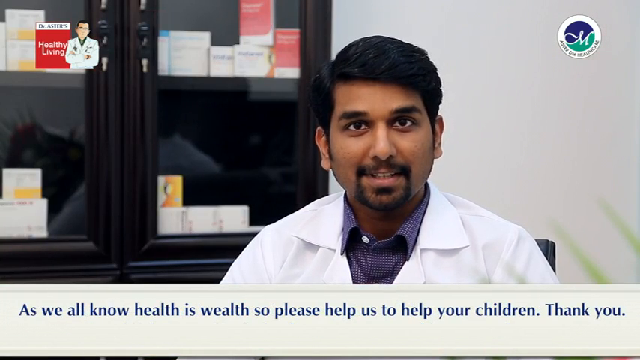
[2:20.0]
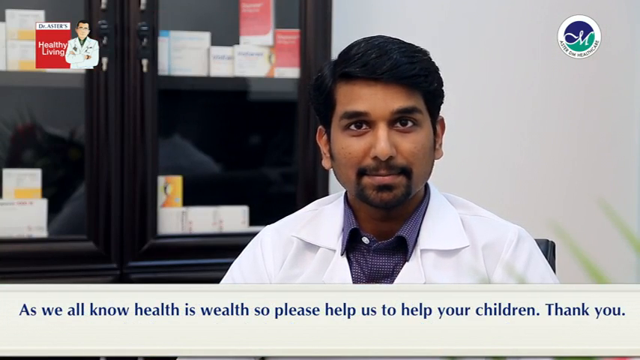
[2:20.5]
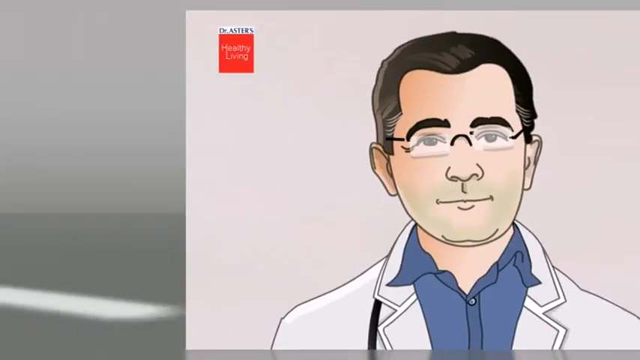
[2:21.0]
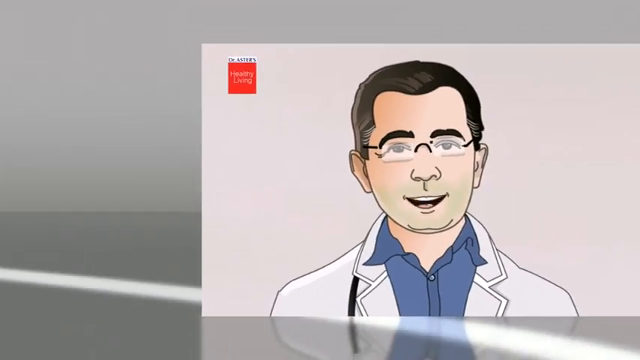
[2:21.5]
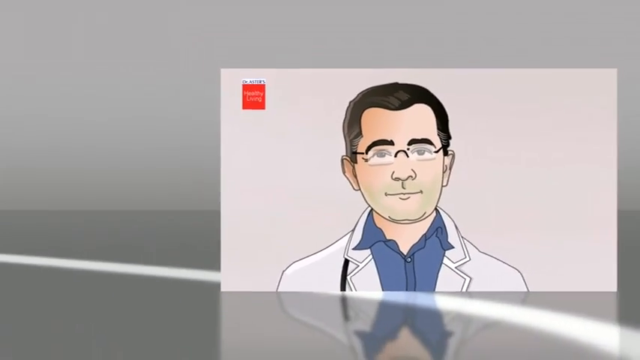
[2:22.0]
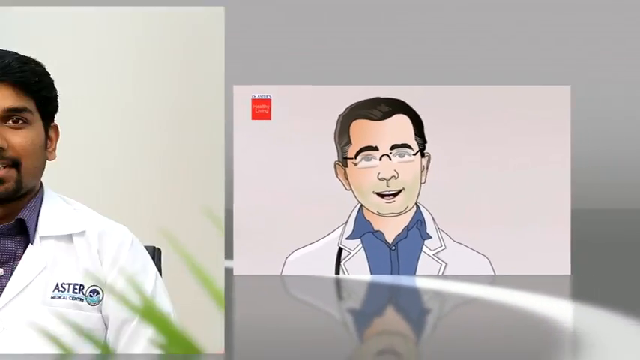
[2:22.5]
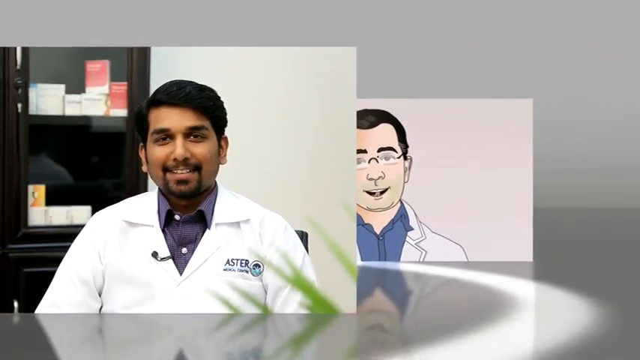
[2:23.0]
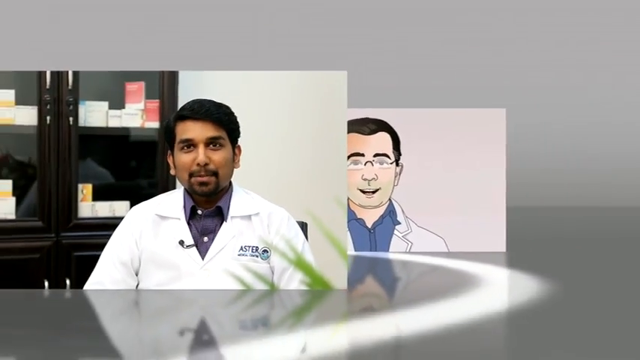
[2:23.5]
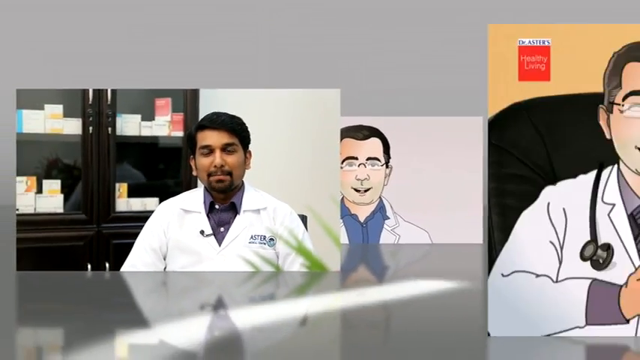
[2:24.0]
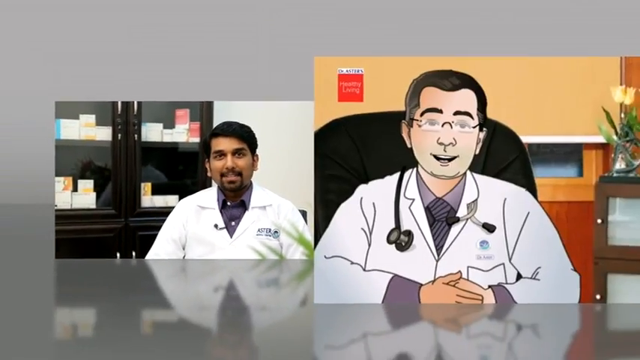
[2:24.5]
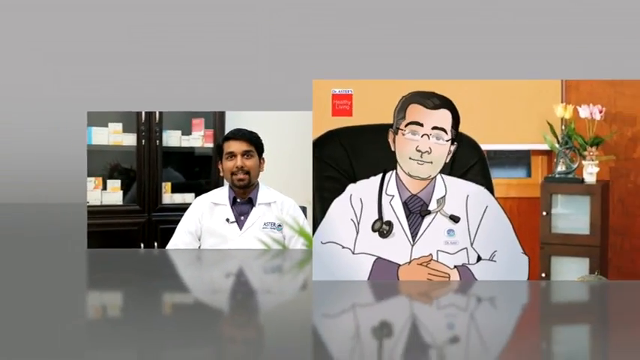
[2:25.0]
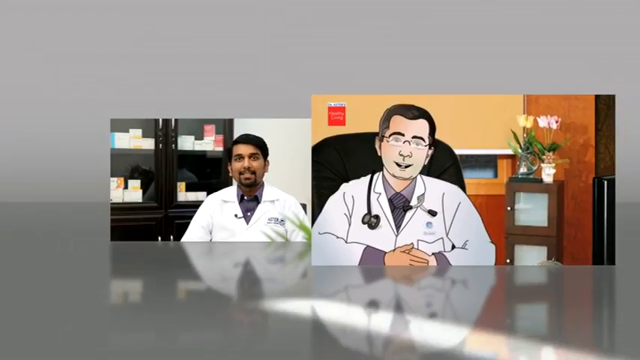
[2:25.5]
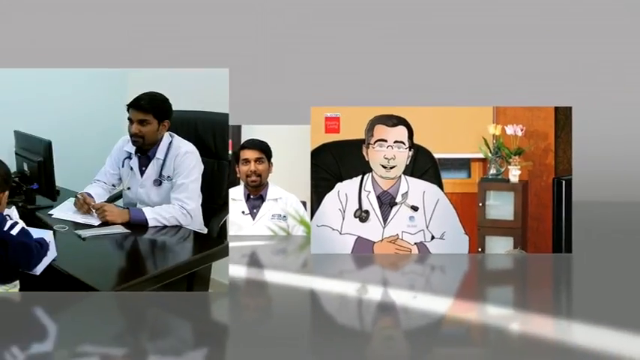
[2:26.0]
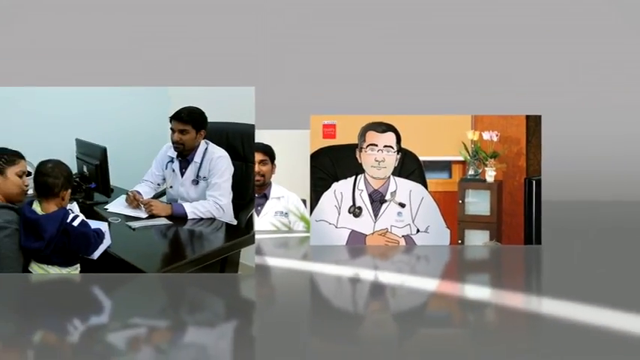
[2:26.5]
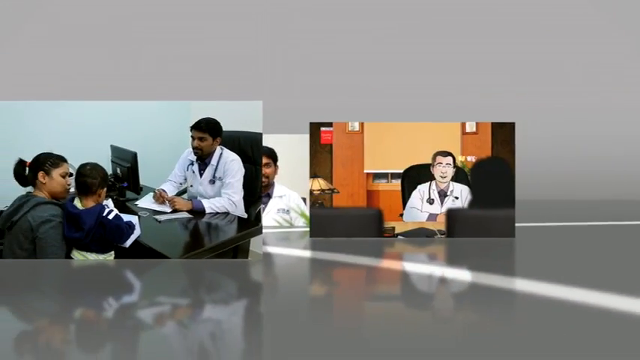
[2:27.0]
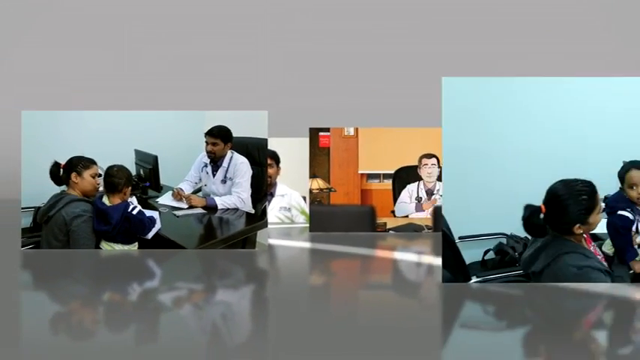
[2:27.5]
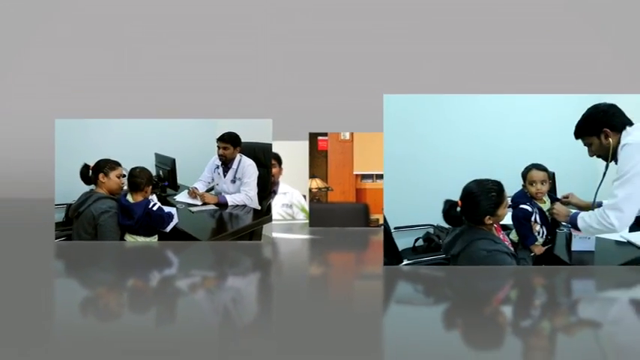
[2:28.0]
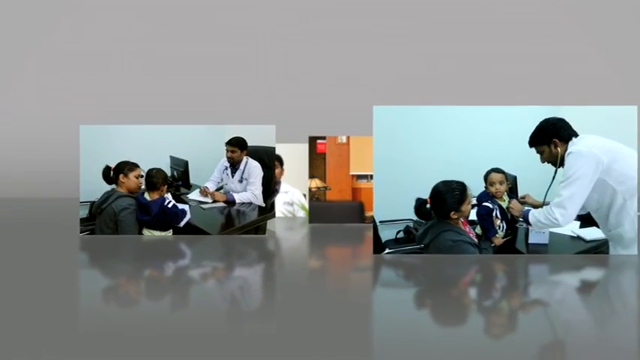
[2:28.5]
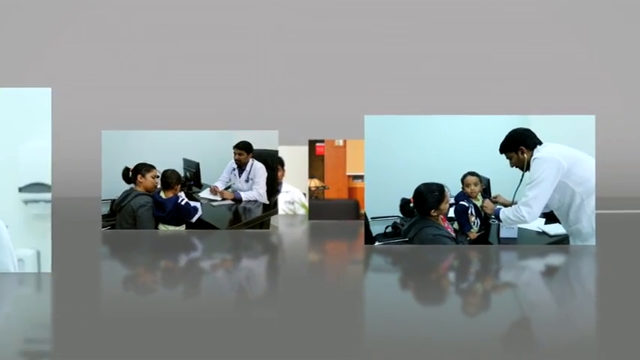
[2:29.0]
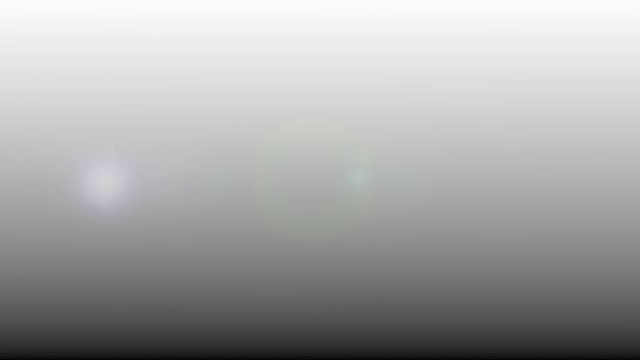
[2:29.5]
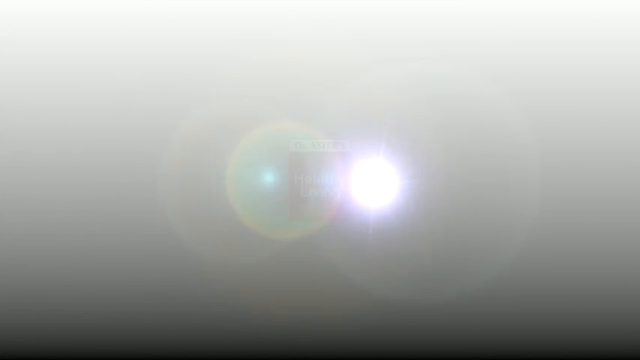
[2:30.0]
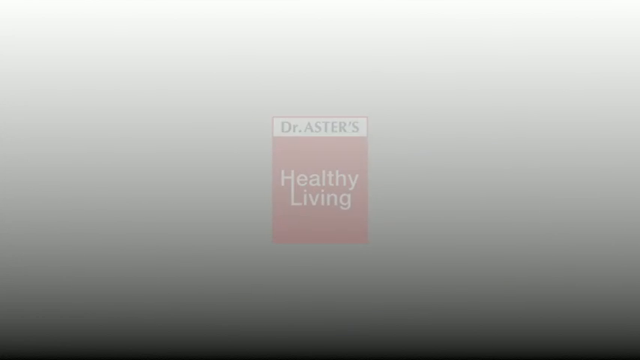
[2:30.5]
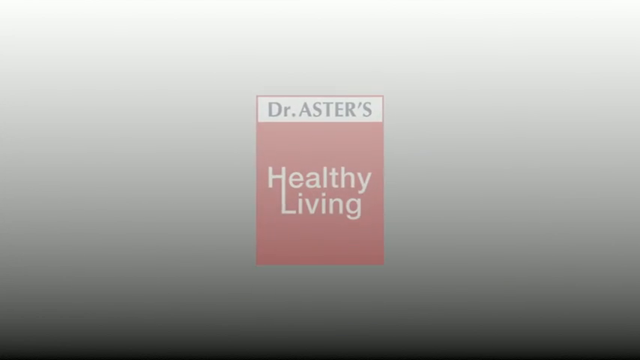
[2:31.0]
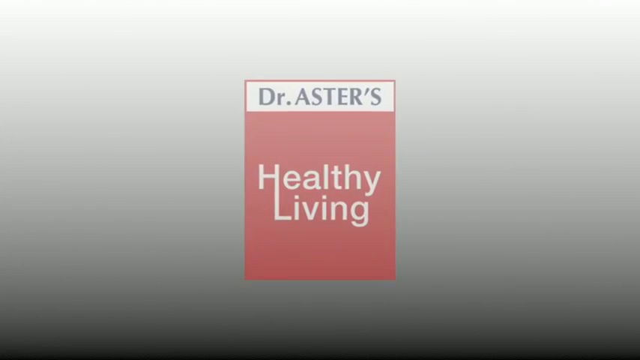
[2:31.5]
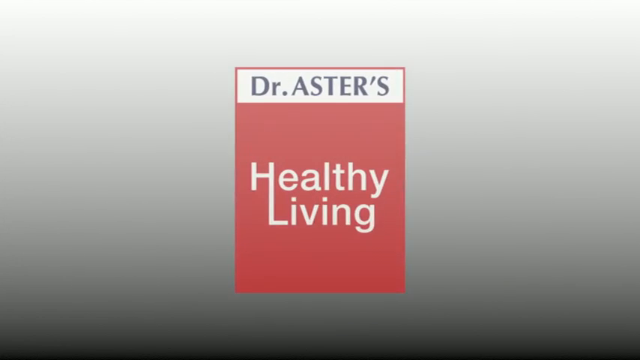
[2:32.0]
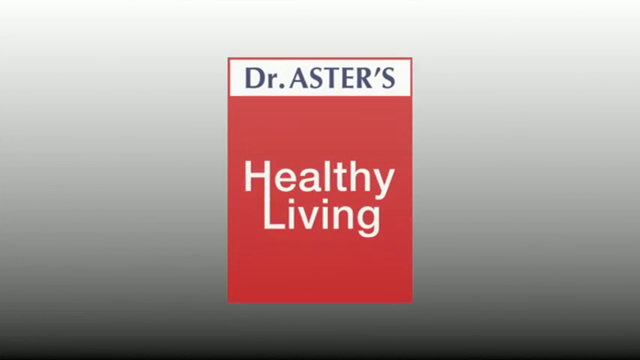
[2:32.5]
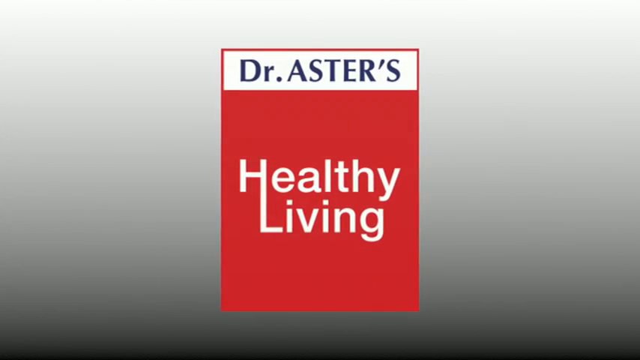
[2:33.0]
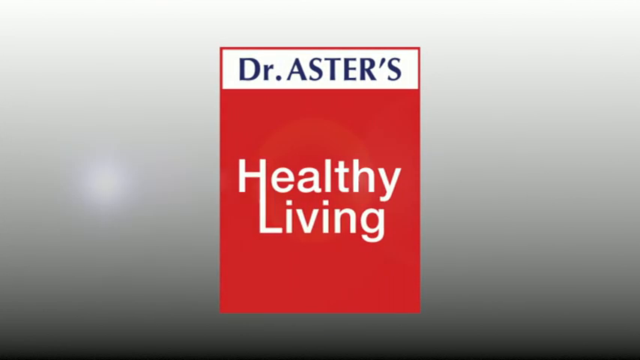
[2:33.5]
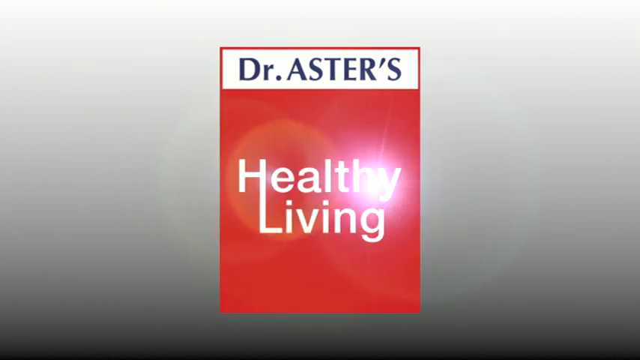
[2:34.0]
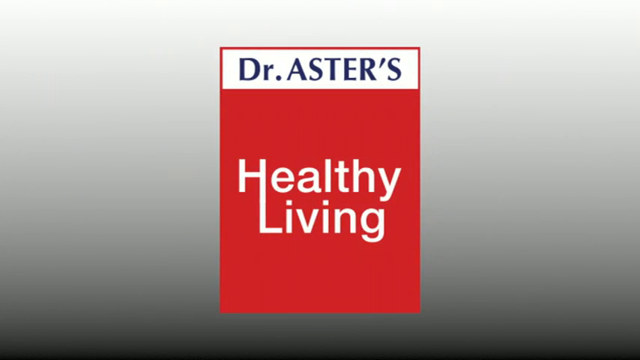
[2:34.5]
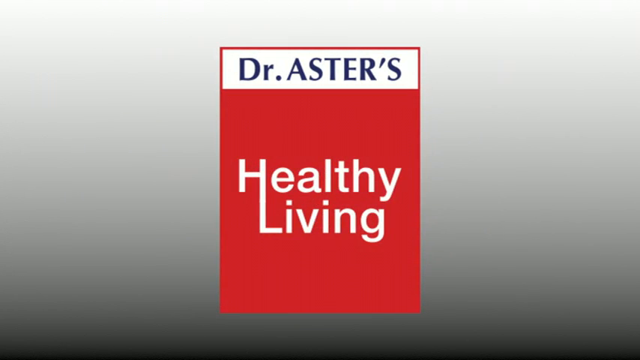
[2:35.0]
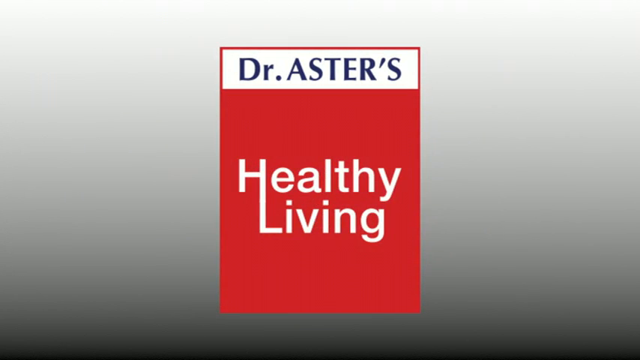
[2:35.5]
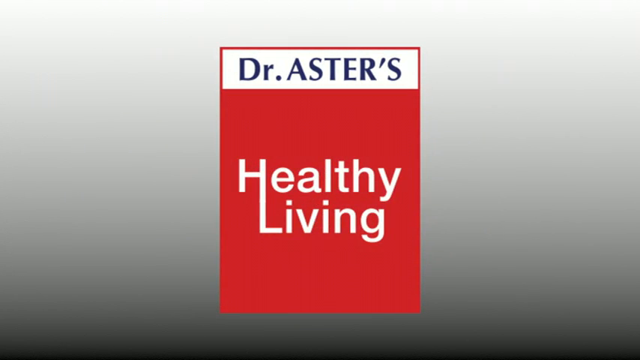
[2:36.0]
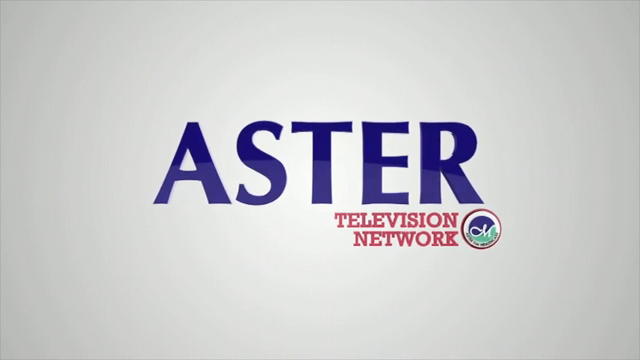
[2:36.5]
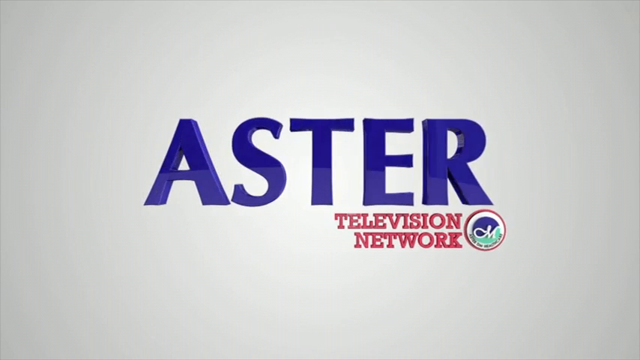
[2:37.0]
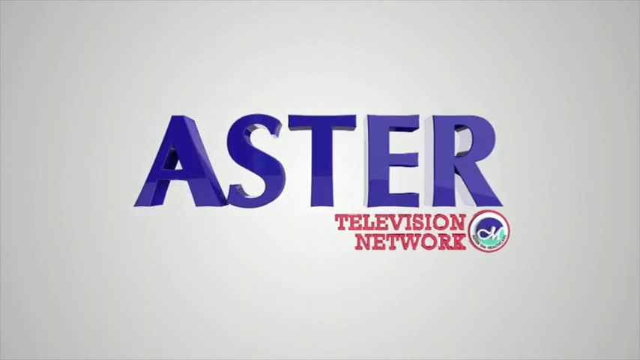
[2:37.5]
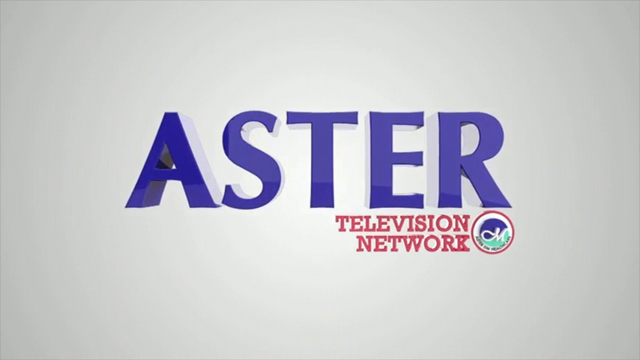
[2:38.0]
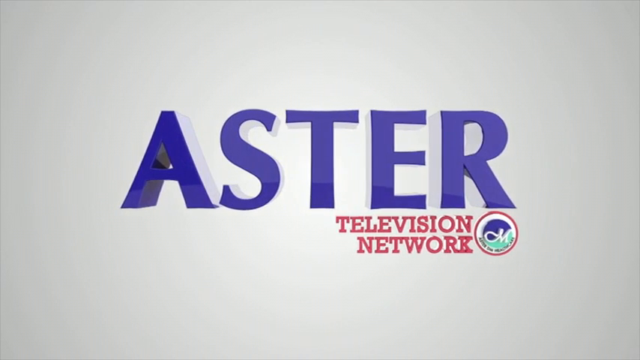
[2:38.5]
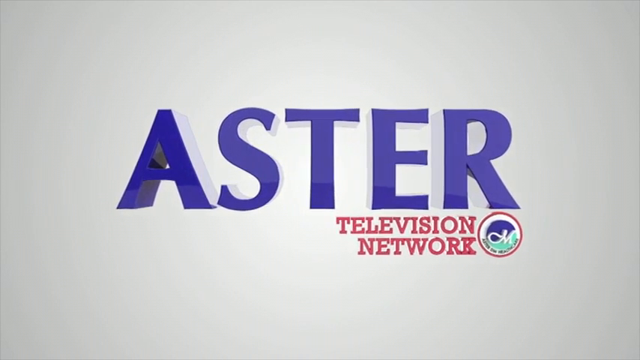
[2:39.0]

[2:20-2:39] An Indian man with black hair and a black goatee sits in a chair speaking to the camera, wearing a purple collared shirt with a white doctor's coat over it. Over his right shoulder behind him is a black bookshelf with shelves holding boxes of different colors and sizes with stuff in them; over his left shoulder only a white wall is visible. That scene goes away and different pictures start appearing on the screen; they appear big, then float off into the middle of the screen and disappear. They include a cartoon picture of a doctor, a real doctor, another cartoon doctor picture, a doctor sitting in front of a woman and a little boy, and a doctor with a stethoscope checking a little kid's heart. The screen turns gray and a red box appears in the middle reading "Healthy Living," with "Dr. Astors" above it in a white strip. The screen then turns gray again, and in the middle, written really big in blue, is "esther," with "television network" written in red underneath.